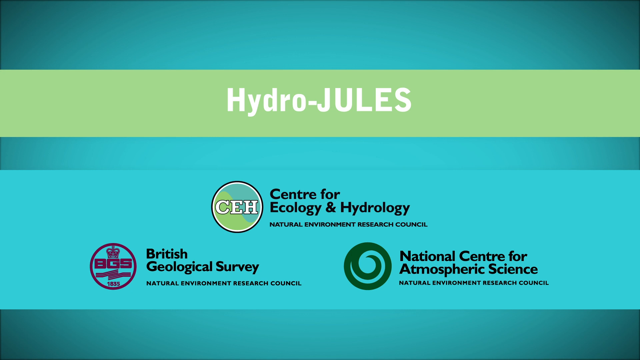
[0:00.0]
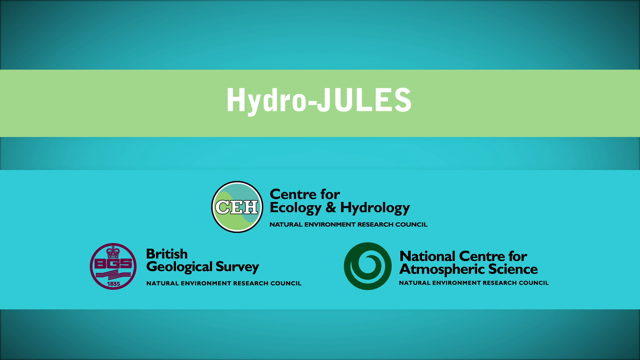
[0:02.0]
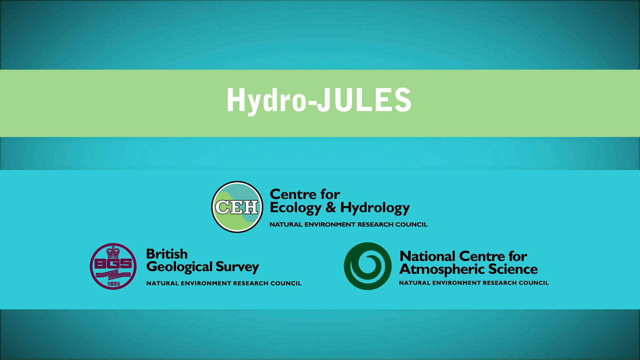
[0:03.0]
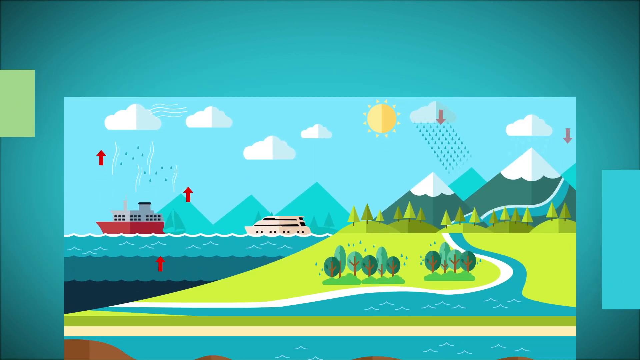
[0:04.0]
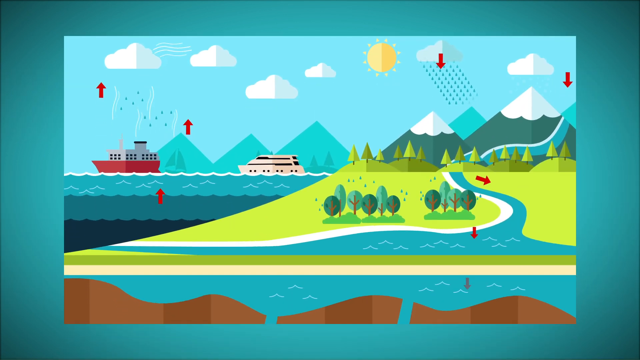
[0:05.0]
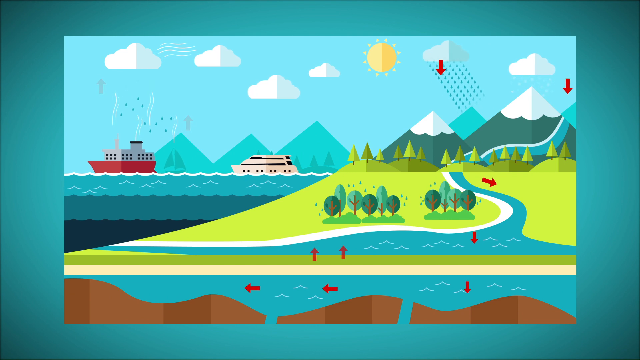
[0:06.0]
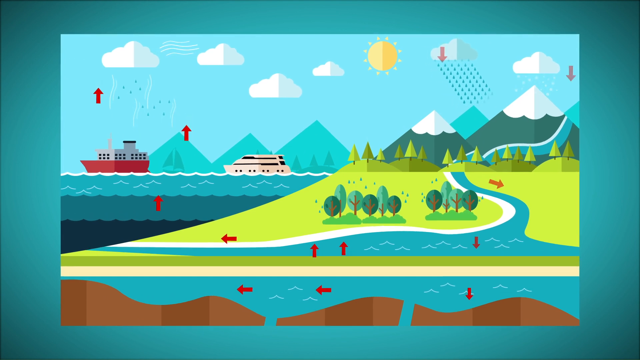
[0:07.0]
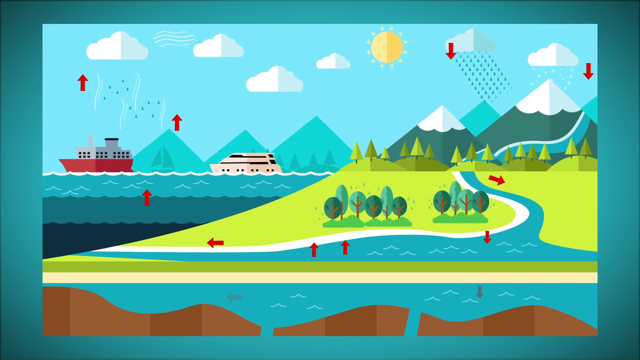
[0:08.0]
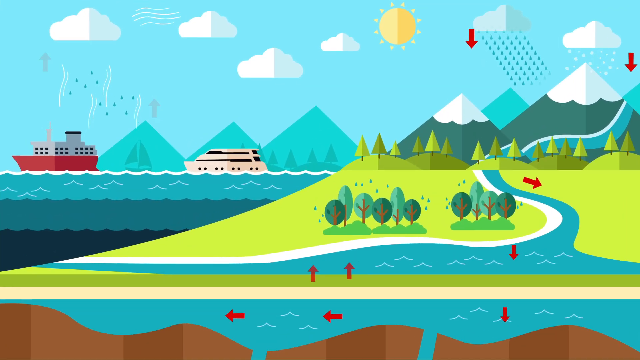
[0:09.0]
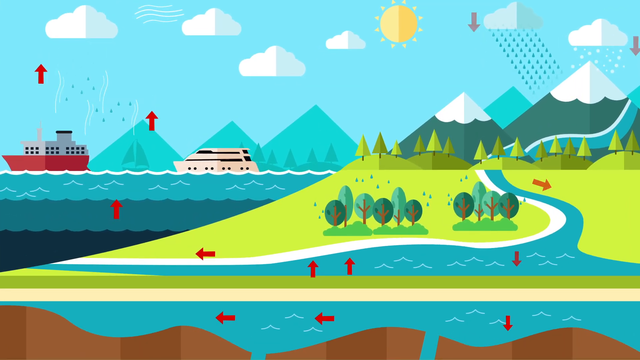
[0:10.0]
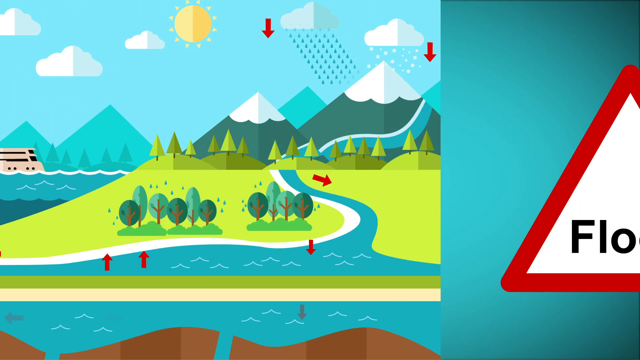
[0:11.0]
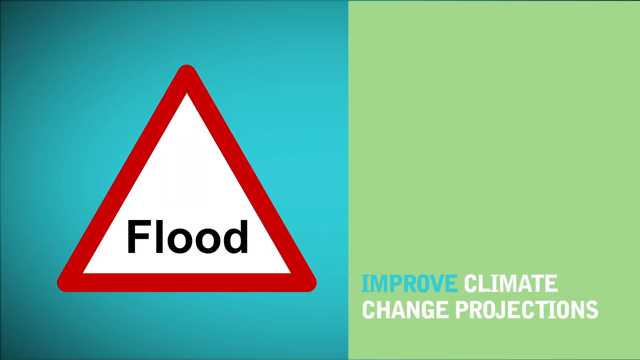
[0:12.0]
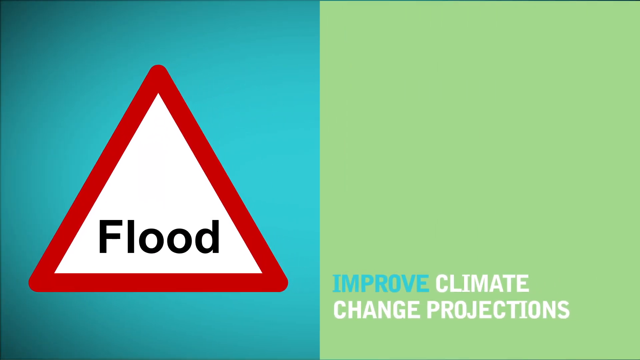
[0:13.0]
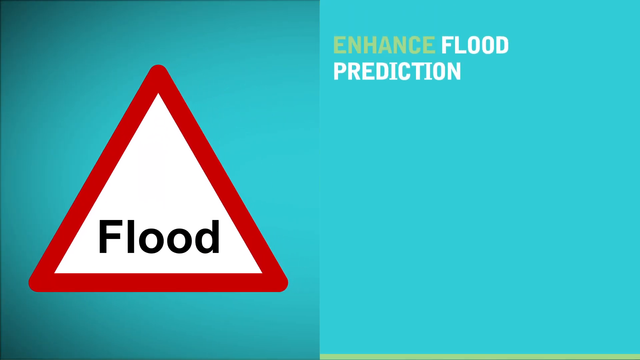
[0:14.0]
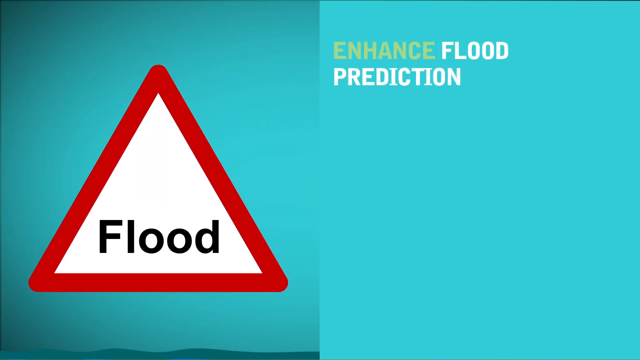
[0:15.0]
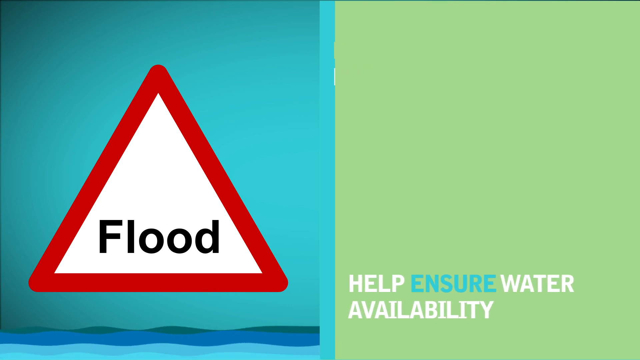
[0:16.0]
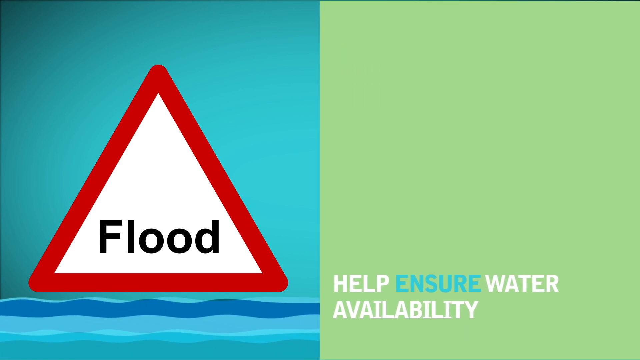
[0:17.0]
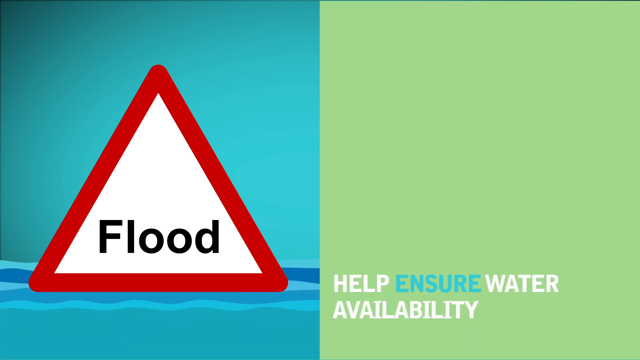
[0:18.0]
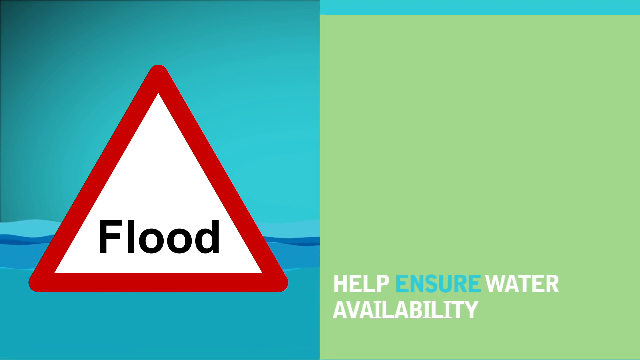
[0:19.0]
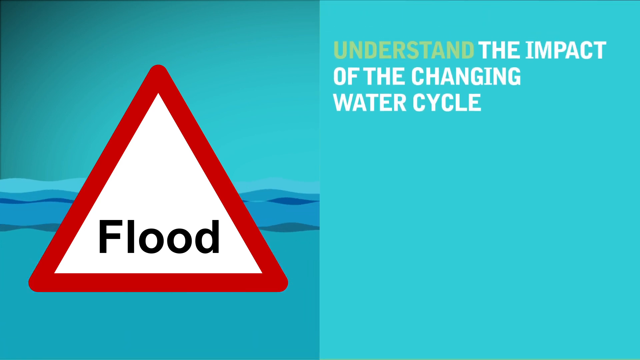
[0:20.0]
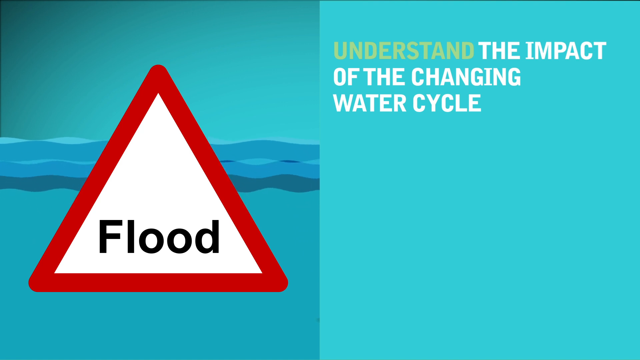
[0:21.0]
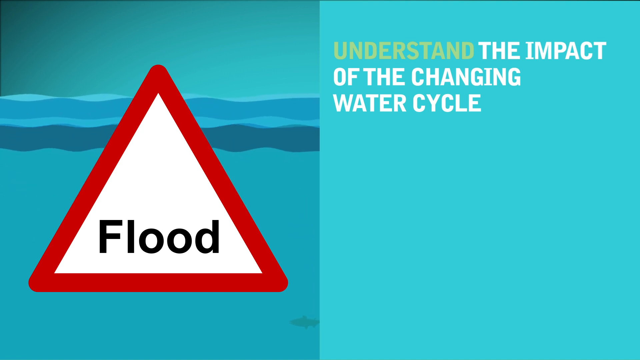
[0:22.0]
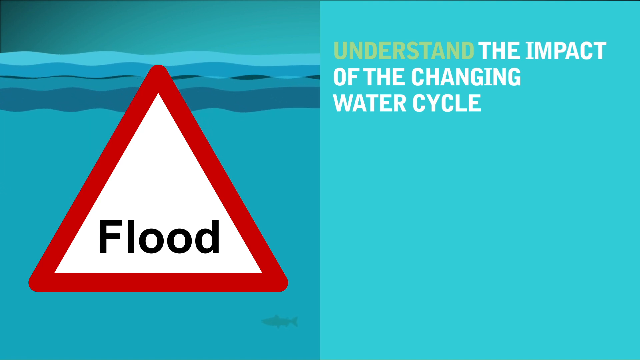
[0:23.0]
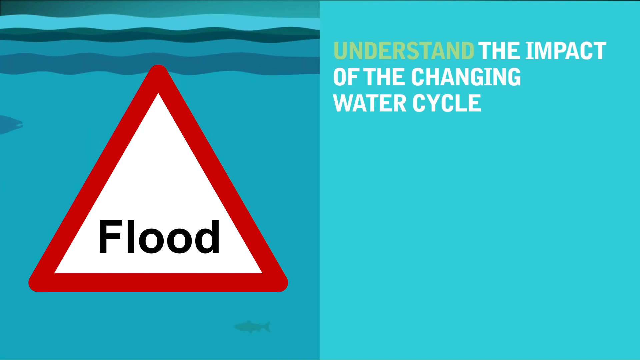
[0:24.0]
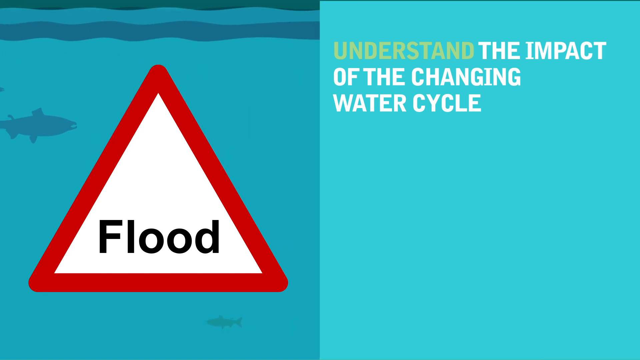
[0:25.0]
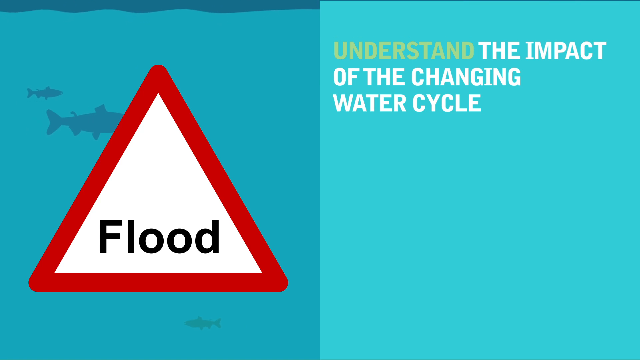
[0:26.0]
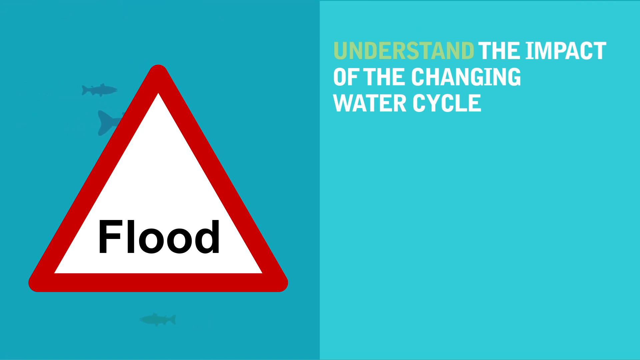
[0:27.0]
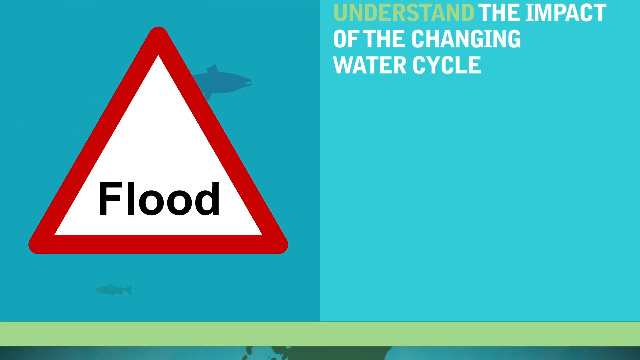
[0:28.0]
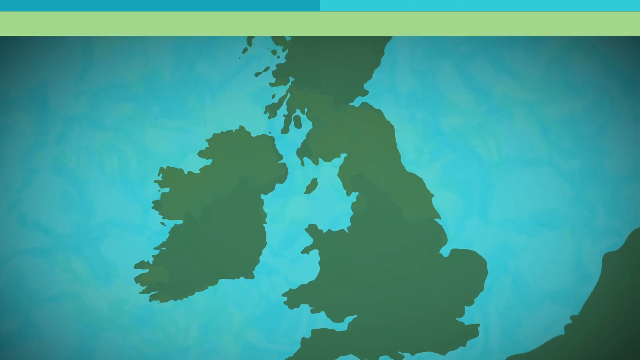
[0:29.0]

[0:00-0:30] The video opens on a blue background with a green banner reading "Hydro-Jules". Beneath it are the logos of three organizations: the Center for Ecology and Hydrology, Natural Environment Research Council; on the left, British Geological Survey, Natural Environment Research Council; and on the right, National Center for Atmospheric Science, Natural Environment Research Council. The scene then switches to what looks like a cartoon version of the land. On the left is the ocean, with a red boat and a white boat floating on it. On the right are mountains and a grassy area with trees. A river flows down from the top of a mountain to an area at the bottom of the screen and appears to lead into the ocean. In the sky is a yellow sun split in two, lighter yellow on the left and darker yellow on the right. Three ordinary clouds float above the ocean; to the right, one cloud is raining, and a cloud on the far right is snowing onto the mountain. Red arrows show the direction of water flowing from the mountains into the ocean and then being absorbed up into the clouds again. Next comes a split screen. The left side has a blue background with a red triangle containing a white triangle and the word "flood". On the right side, "Enhance Flood Prediction" appears at the top, followed by a green screen reading "Help Ensure Water Availability" and then a blue screen reading "Understand the Impact of the Changing Water Cycle". Meanwhile, on the left side, the impression of water floats up toward the top of the screen, and some fish appear in the background.